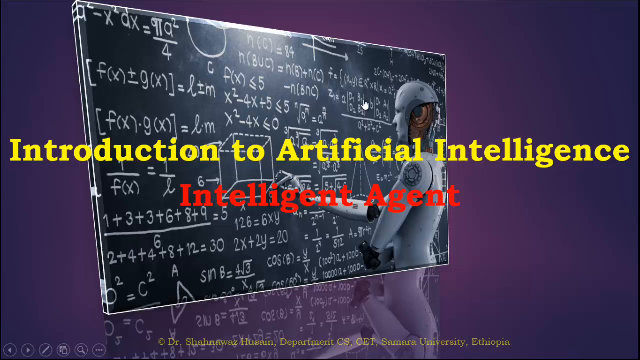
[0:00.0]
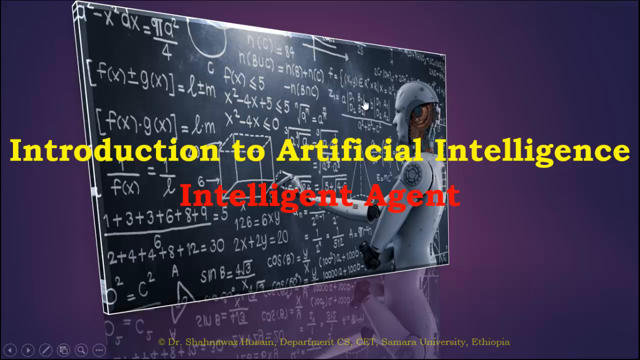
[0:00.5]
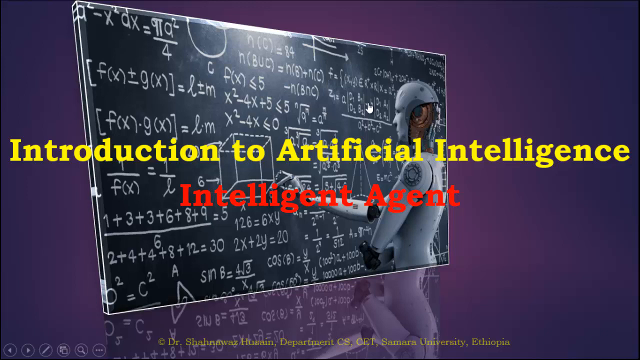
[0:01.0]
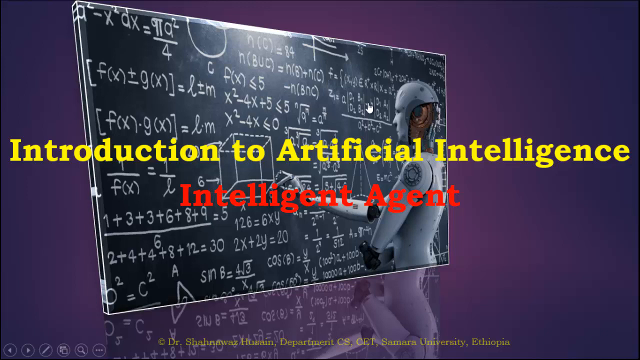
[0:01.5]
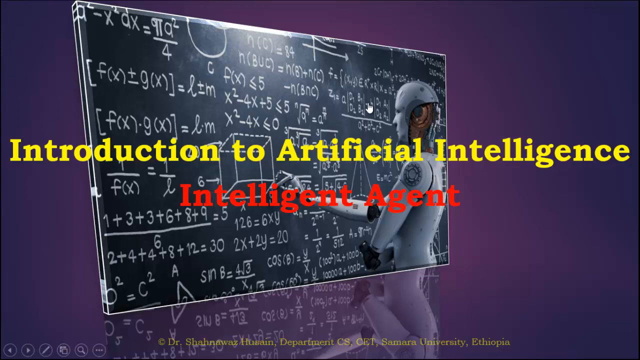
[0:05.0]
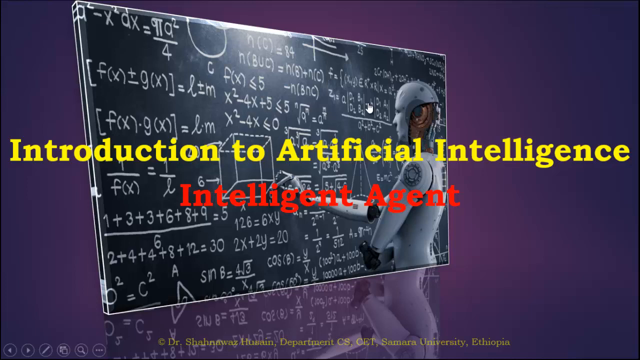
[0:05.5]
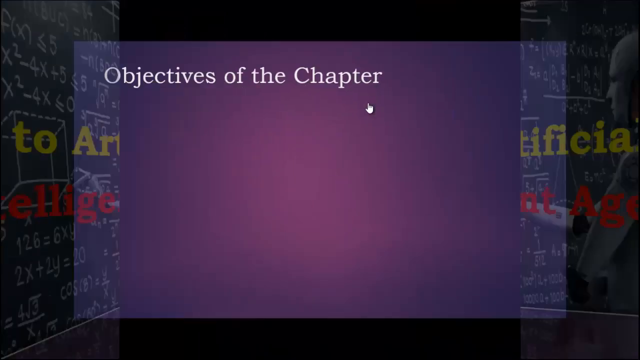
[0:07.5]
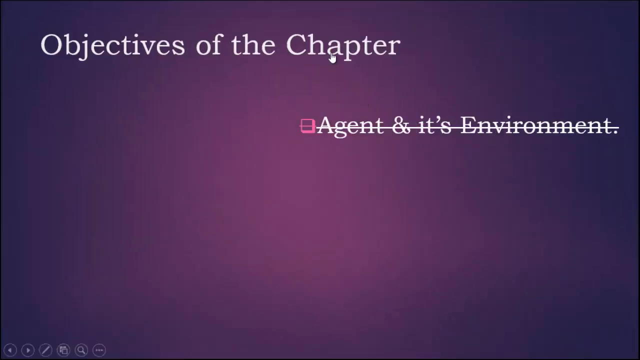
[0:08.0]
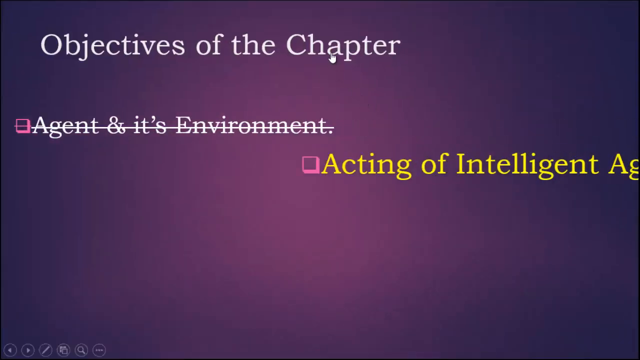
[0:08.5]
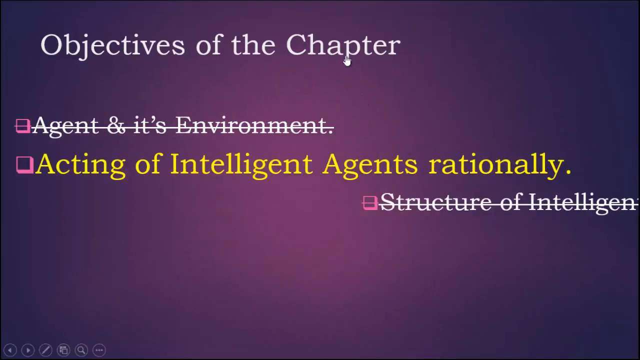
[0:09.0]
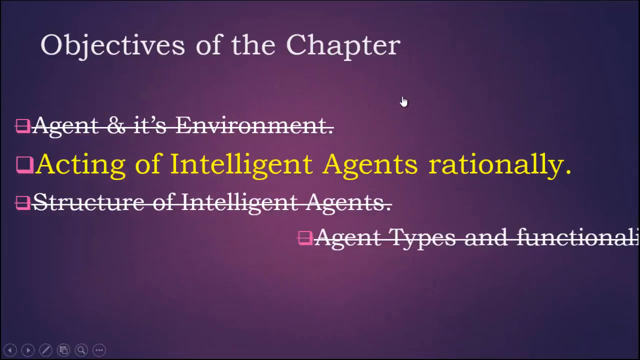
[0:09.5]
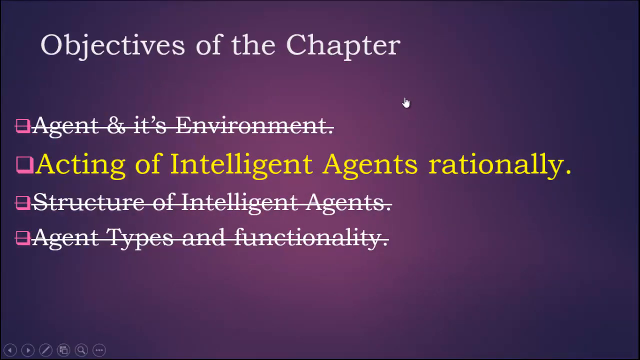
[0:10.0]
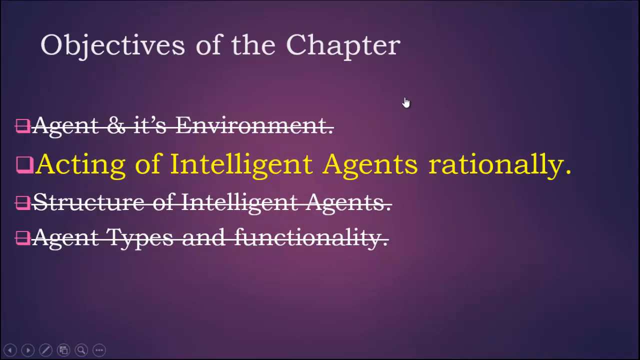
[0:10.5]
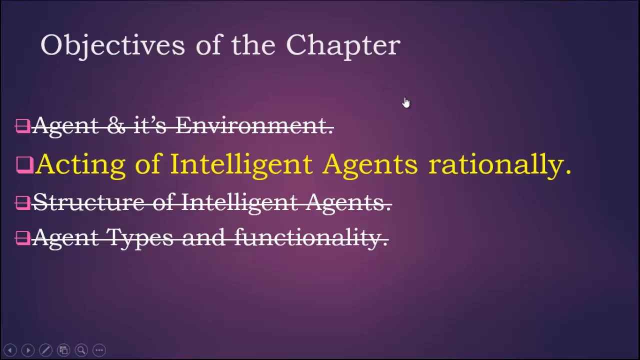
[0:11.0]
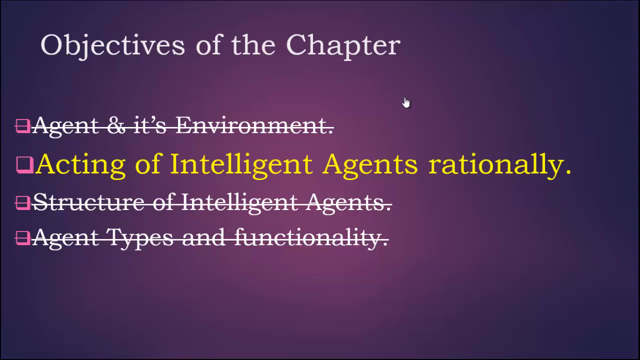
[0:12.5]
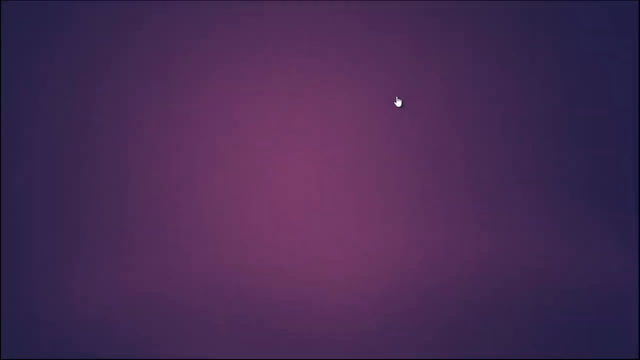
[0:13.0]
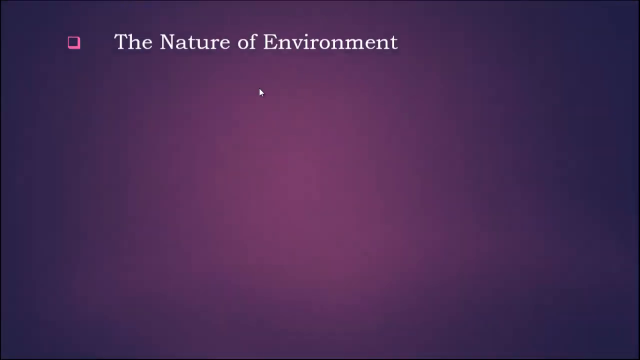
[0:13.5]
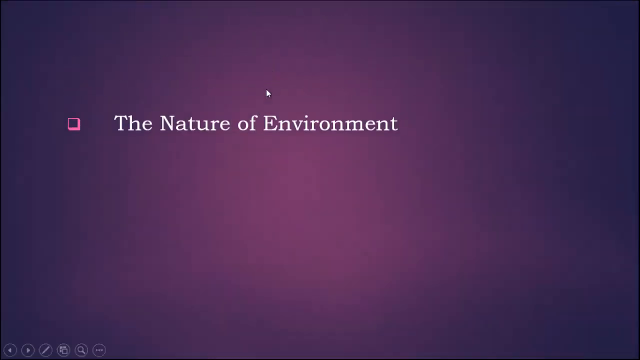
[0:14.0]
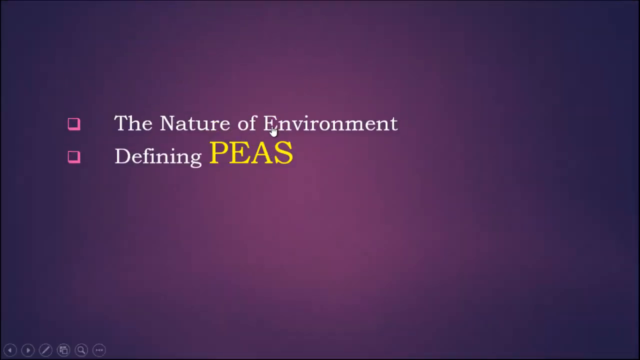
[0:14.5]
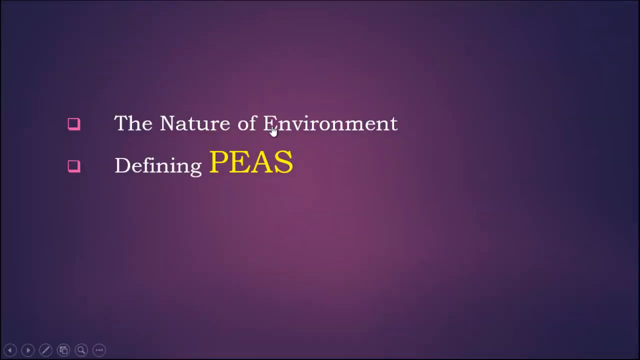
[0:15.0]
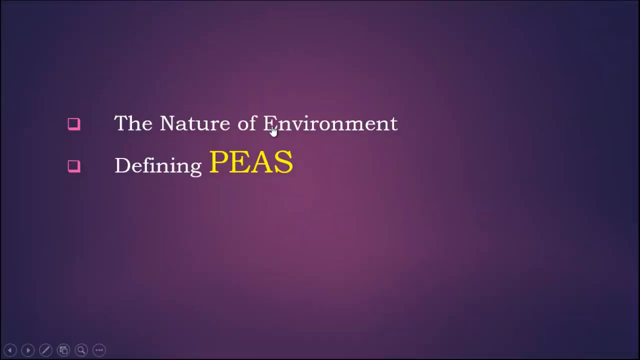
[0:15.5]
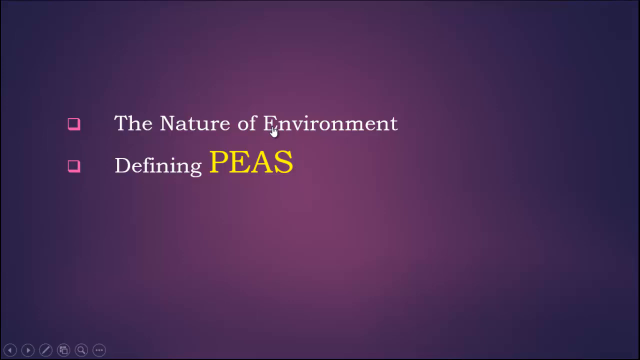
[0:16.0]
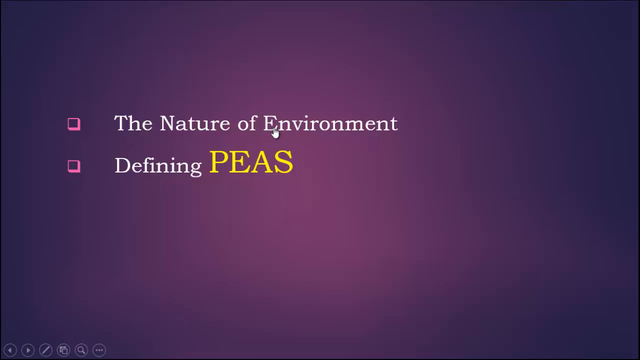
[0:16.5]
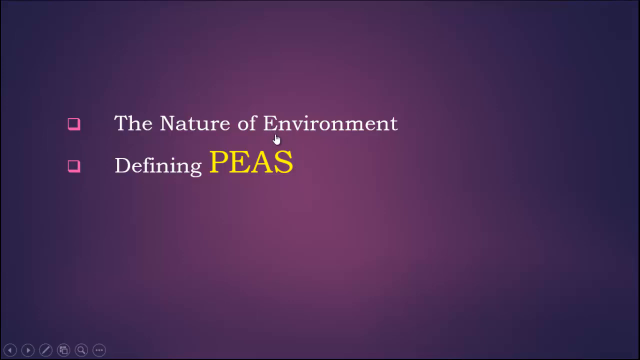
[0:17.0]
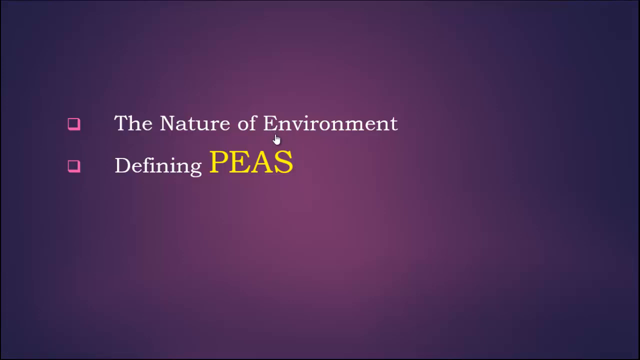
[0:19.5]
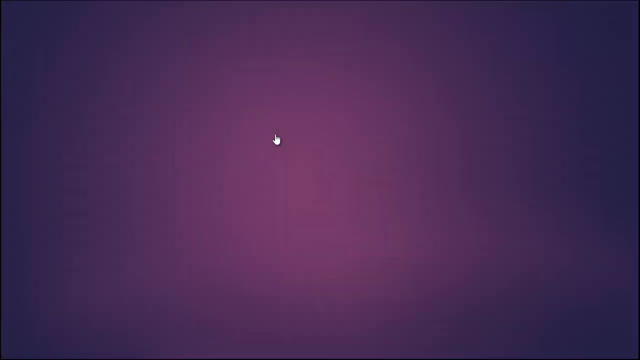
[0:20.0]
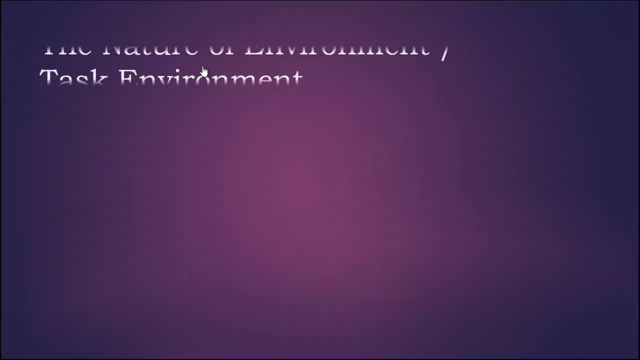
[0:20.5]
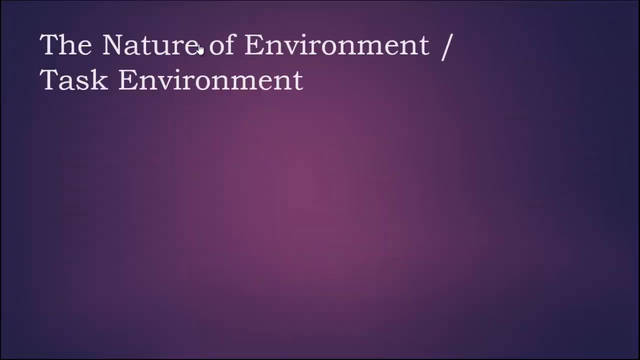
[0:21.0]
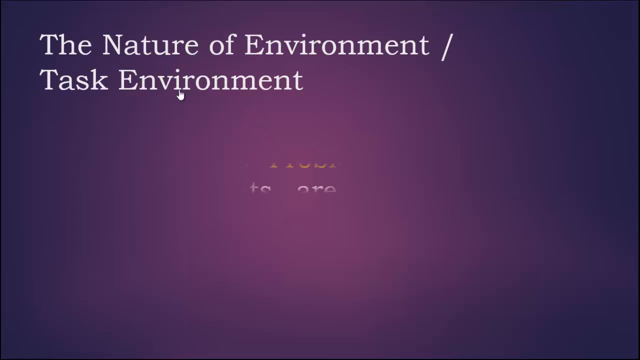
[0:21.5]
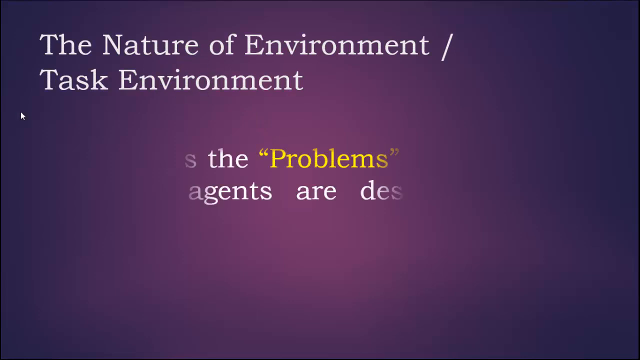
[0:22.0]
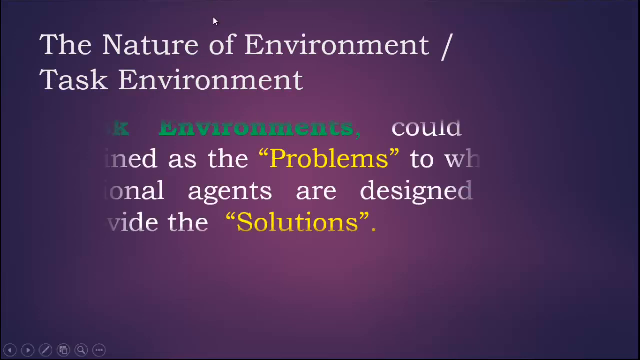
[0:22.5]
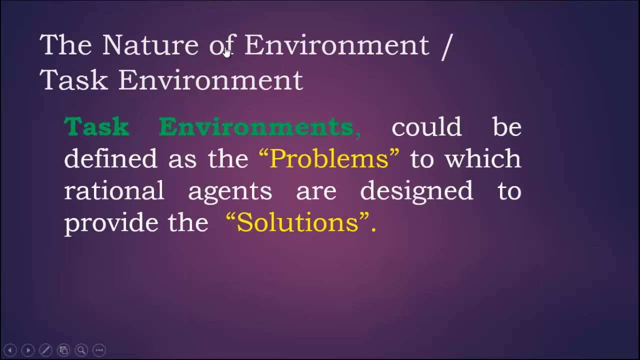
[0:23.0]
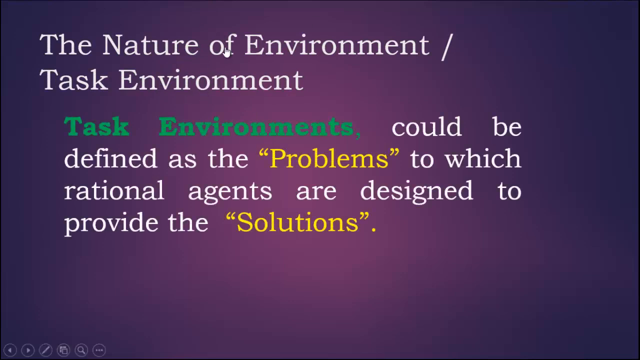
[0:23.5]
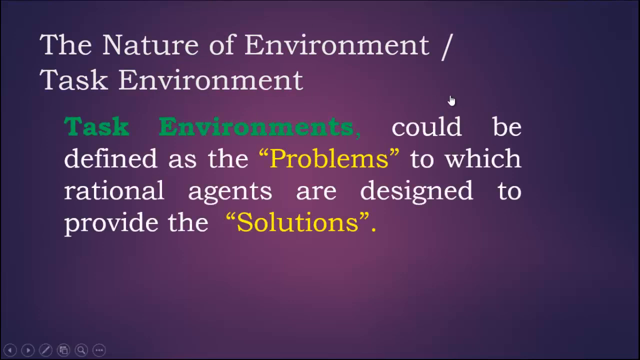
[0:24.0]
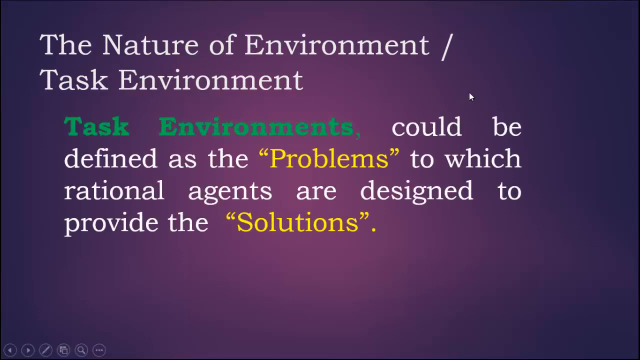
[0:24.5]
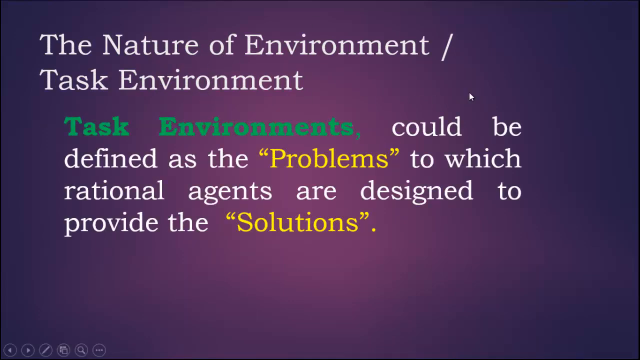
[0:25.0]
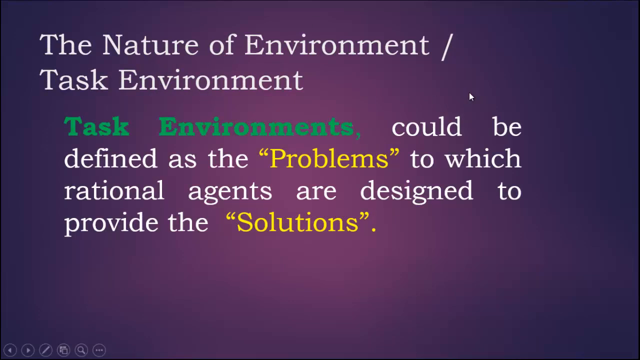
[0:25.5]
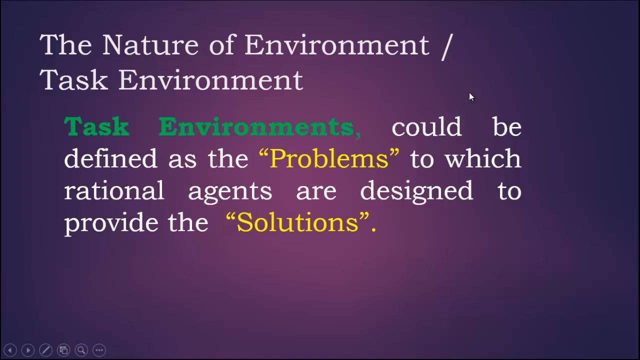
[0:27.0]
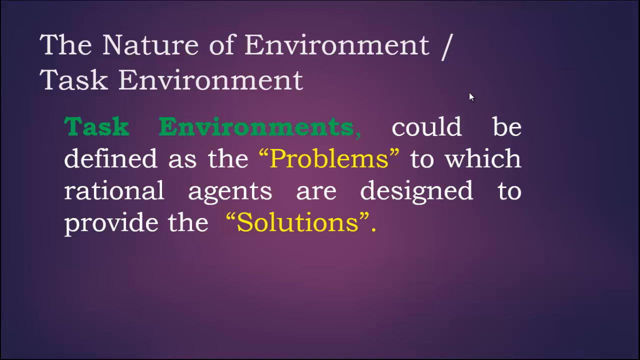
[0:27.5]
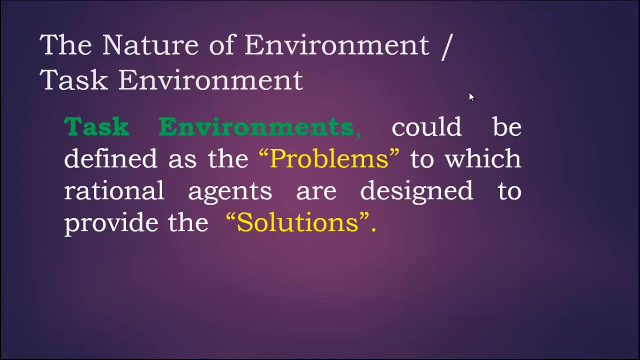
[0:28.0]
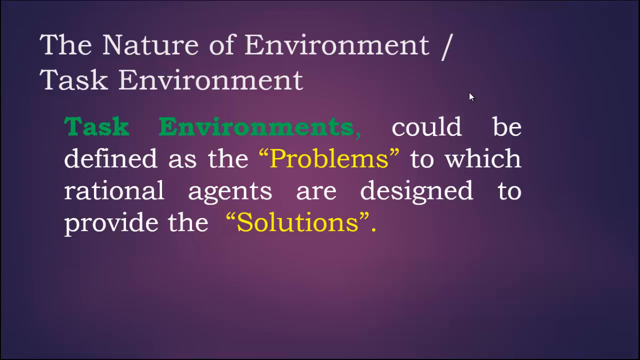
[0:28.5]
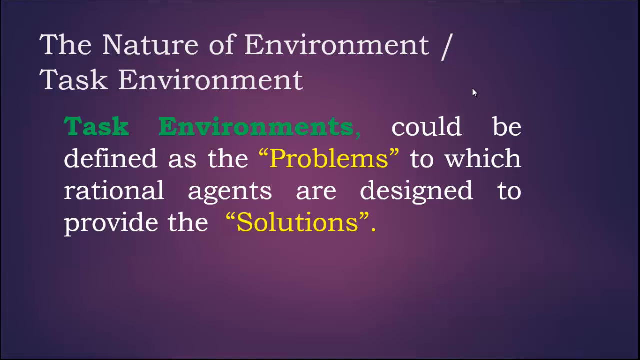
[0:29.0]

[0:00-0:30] An image shows a chalkboard with calculus-type mathematical formulas written all over it, and a robot standing in front of it with its hand writing on the board. The title appears against a purple background and reads "Introduction to Artificial Intelligence, Intelligent Agent." The image then splits in half, revealing the same purple background with "Objectives of the Chapter" at the top and four square bullet points below. Three of them are crossed out with lines; the second one is larger, highlighted in yellow, and reads "Acting of Intelligent Agents Rationally." The screen then splits down the middle and the halves slide apart to the next screen. Two bullet points drop down from the top: one says "nature of environment" and the second says "defining PEAS," with PEAS in capital letters. Those words fly off the screen, and the title of the next slide appears with a description. The words "problems" and "solutions" are highlighted in yellow and placed in quotation marks.